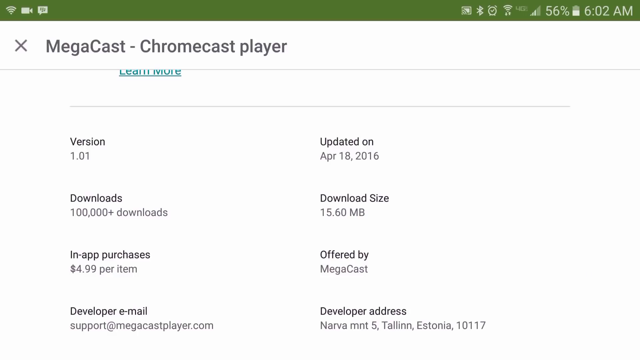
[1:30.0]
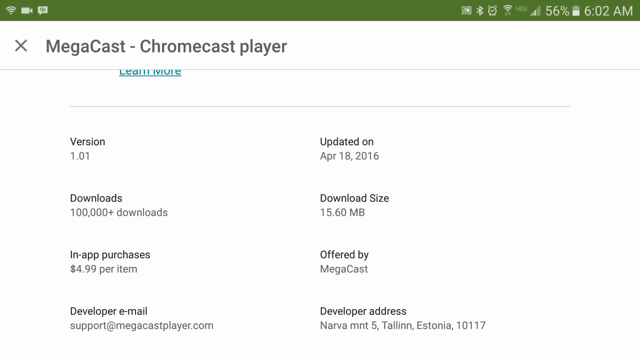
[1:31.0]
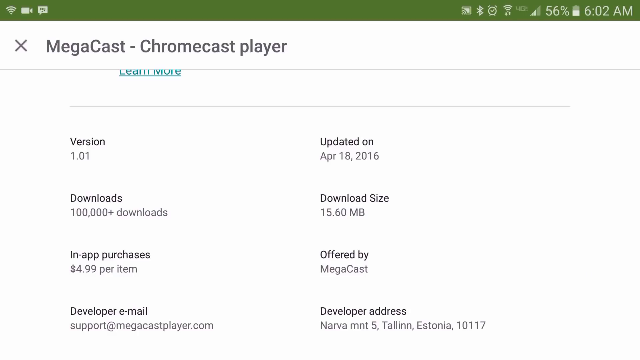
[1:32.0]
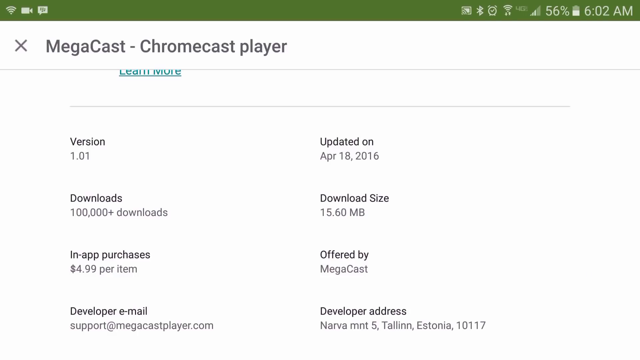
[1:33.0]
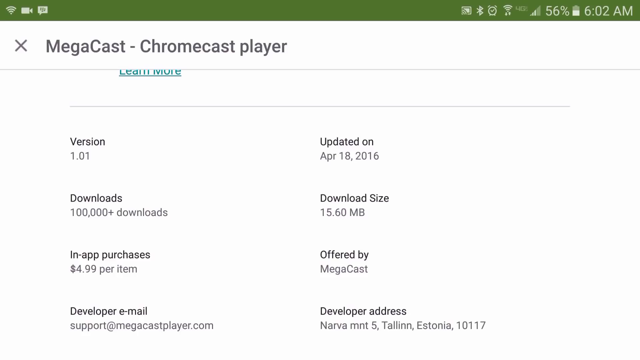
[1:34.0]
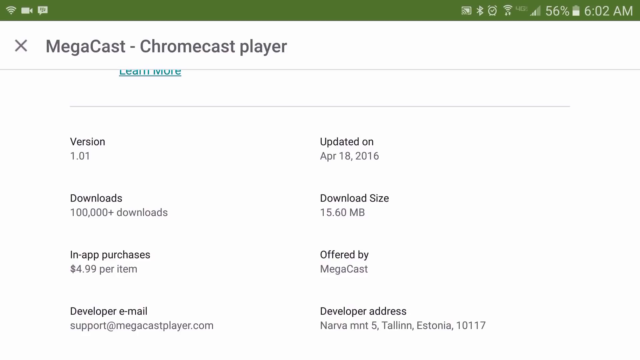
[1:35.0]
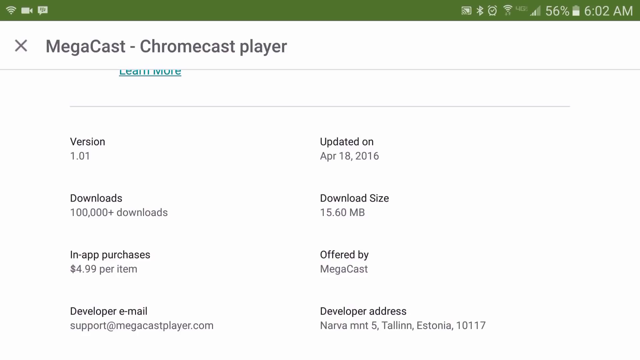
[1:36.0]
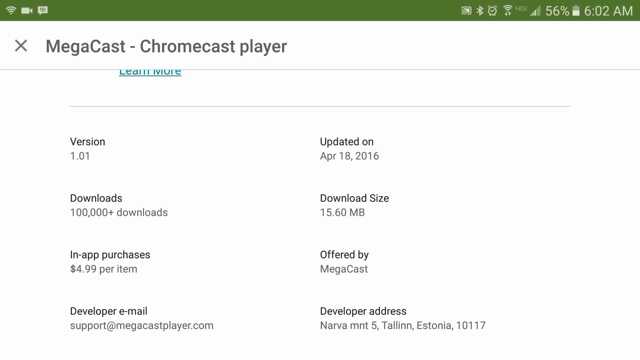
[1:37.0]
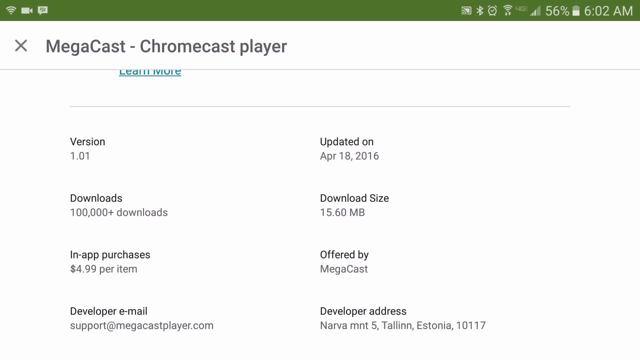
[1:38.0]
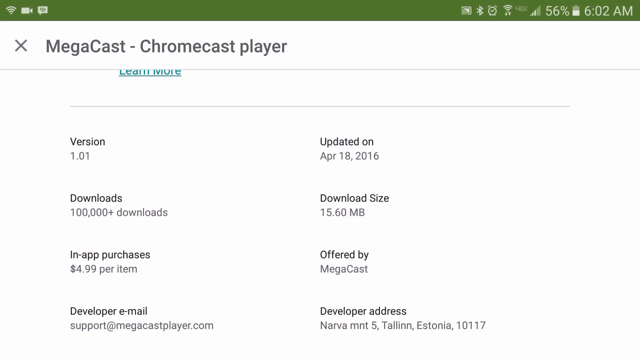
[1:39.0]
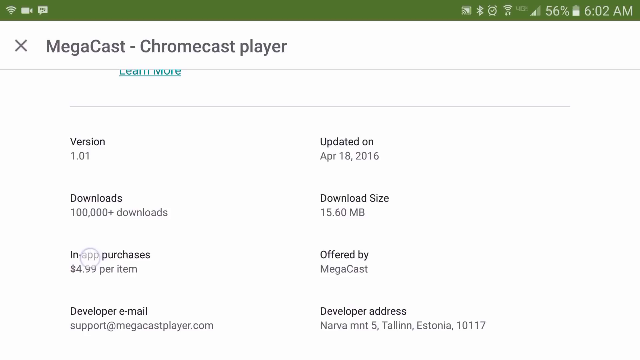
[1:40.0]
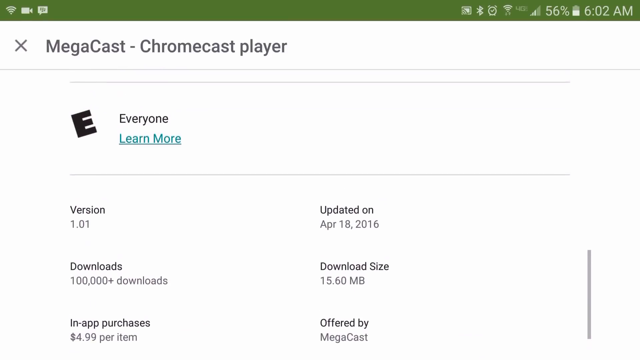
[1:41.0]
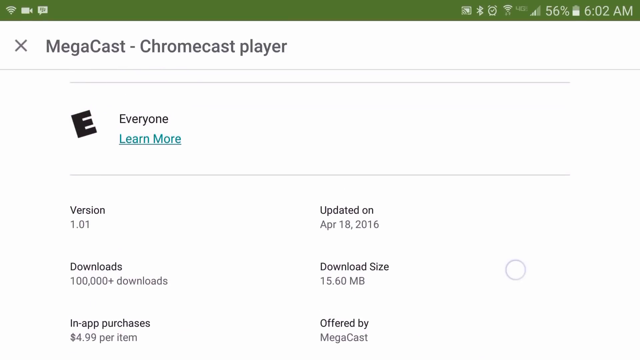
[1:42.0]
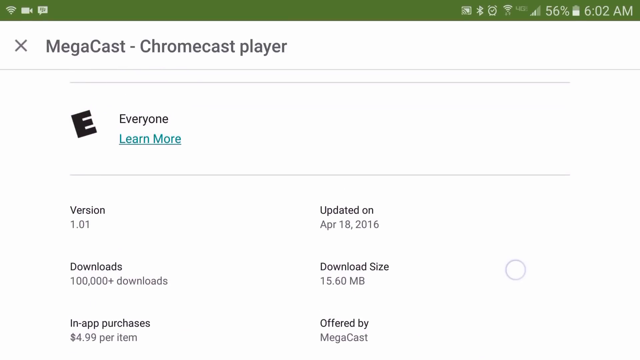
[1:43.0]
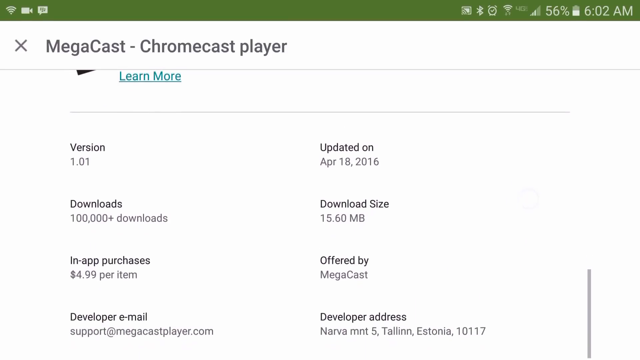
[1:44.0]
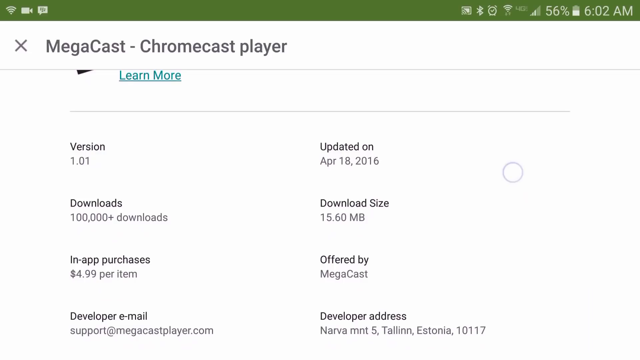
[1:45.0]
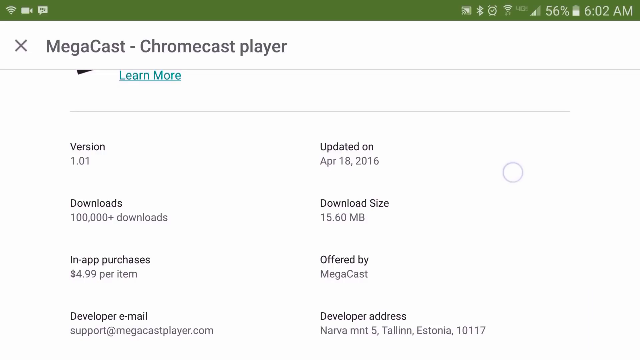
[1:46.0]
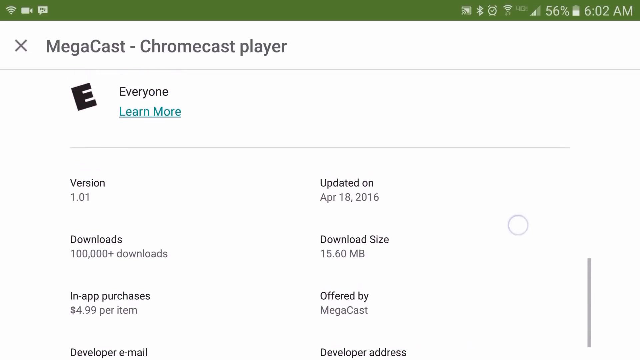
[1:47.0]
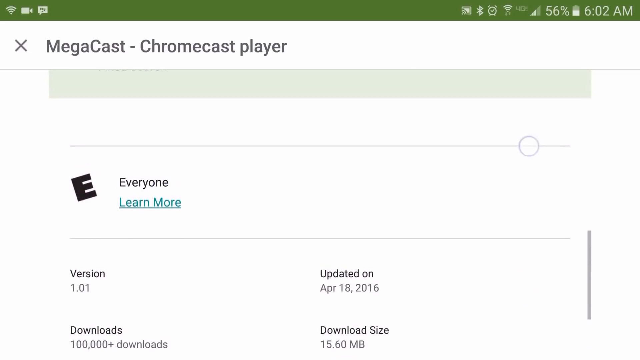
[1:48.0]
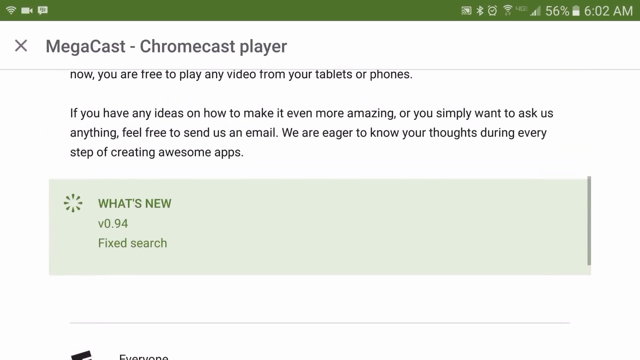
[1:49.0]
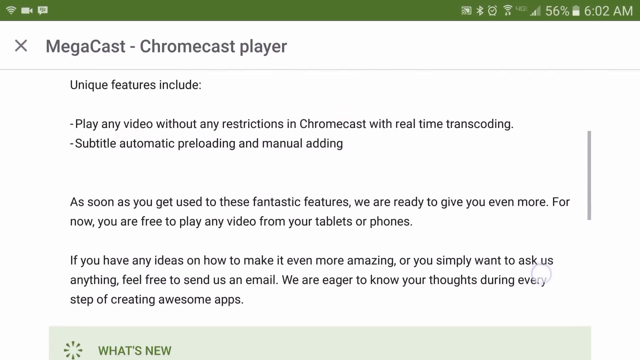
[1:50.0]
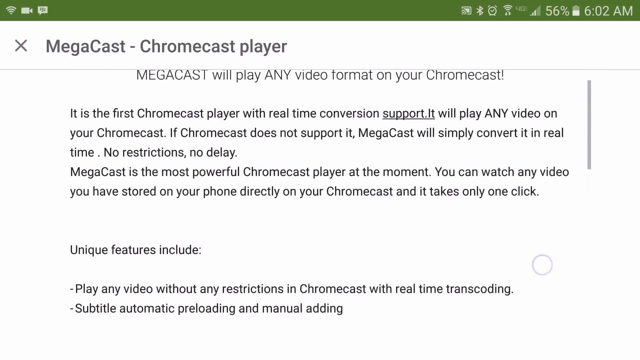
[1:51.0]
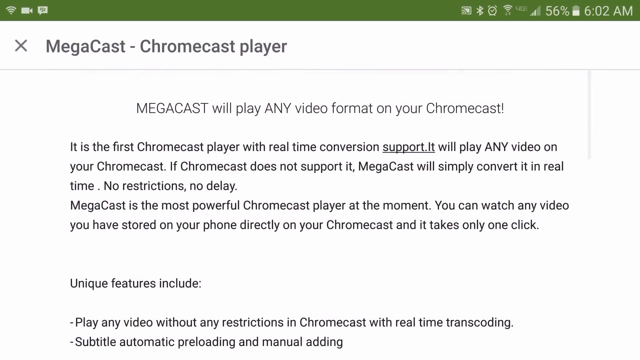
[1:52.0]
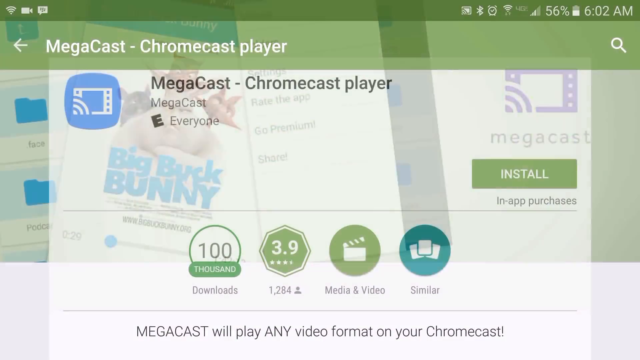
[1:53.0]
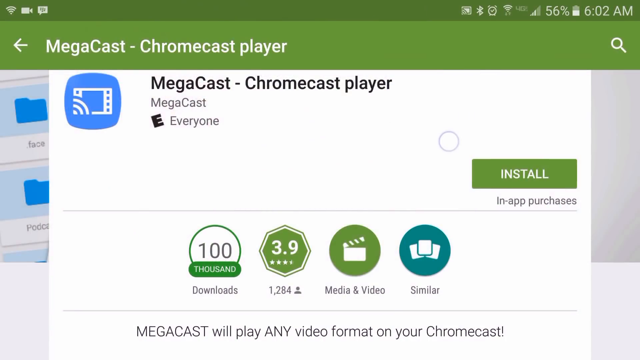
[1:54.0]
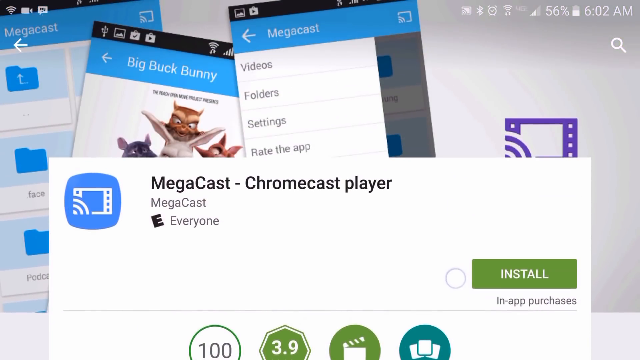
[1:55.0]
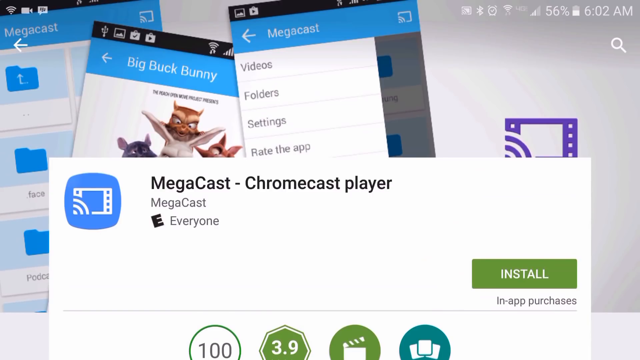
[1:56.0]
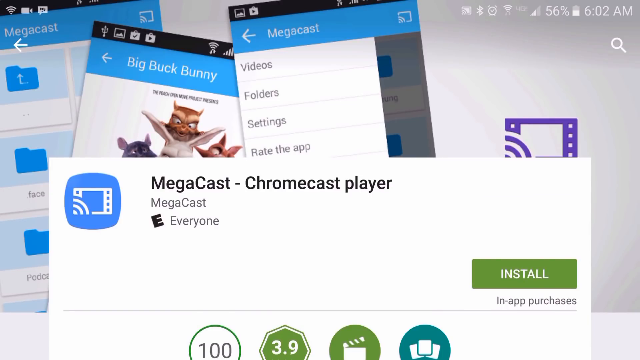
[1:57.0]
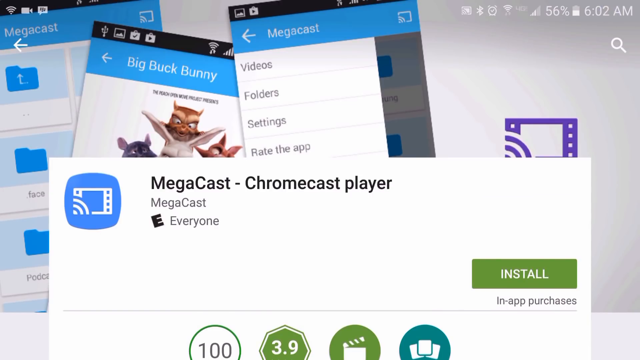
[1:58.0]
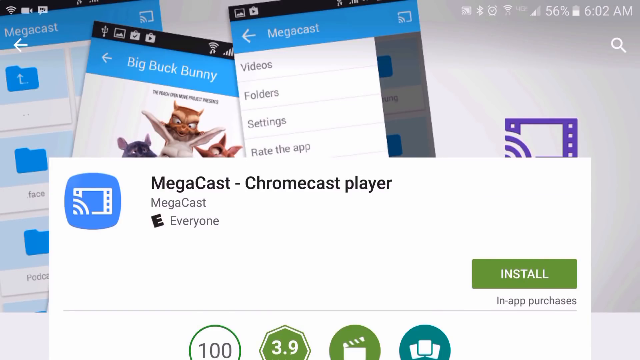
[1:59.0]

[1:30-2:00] A screenshot of the Megacast Chromecast Player download and file size information is shown, scrolling through how many downloads it has had, the download size, and who it is offered by. It scrolls back up to show that it is offered for everyone, in-app purchases are $4.99 per item, it was updated on April 18, 2016, the download size is 15.6 megabytes, it is offered by Megacast, and it is version 0.94; it also says to play any file. It flips back to the Google Play Store showing the Megacast Chromecast Player and its install features, scrolls down to the bottom, and goes back one more time to the background images with the same message: "unique features include playback to any videos. As soon as you get used to these fantastic features, we're ready to give you even more." It also says "If you have any ideas on how to make it better, let us know. We always want to make it more amazing," and says they are there to support users. The background image on the computer this time shows cats riding on bunnies and says "Big Buck Bunny".